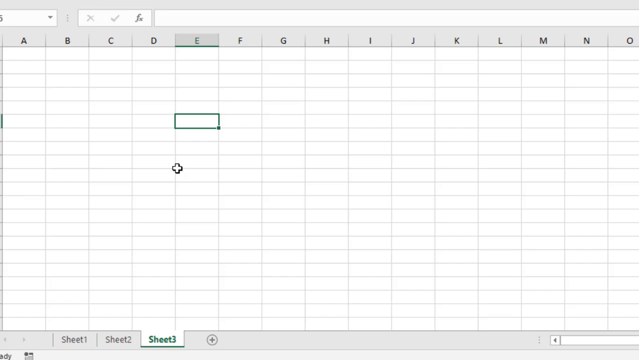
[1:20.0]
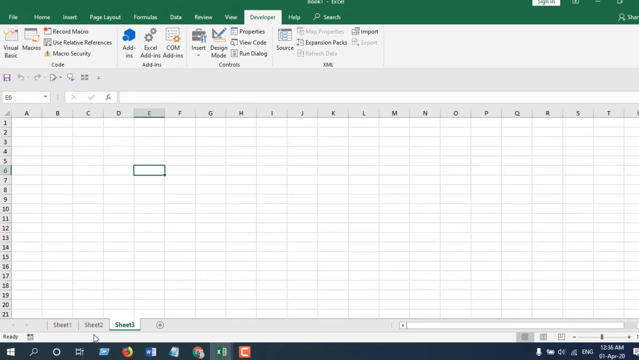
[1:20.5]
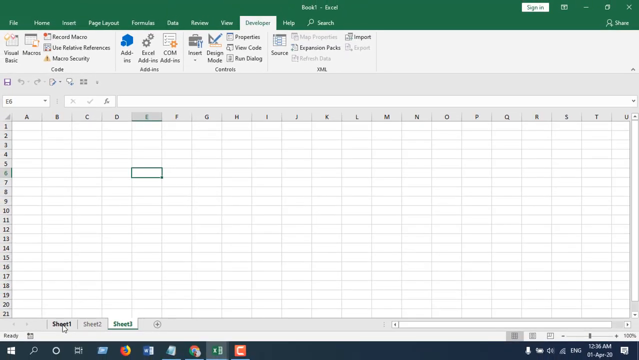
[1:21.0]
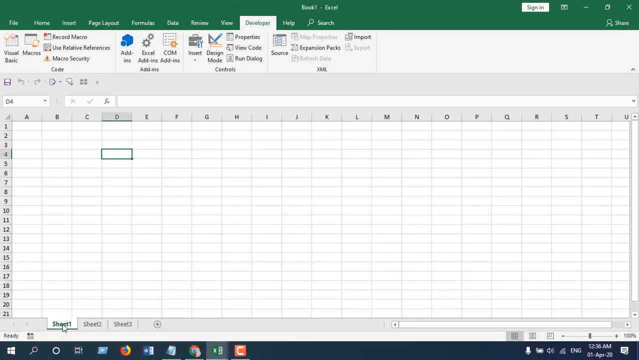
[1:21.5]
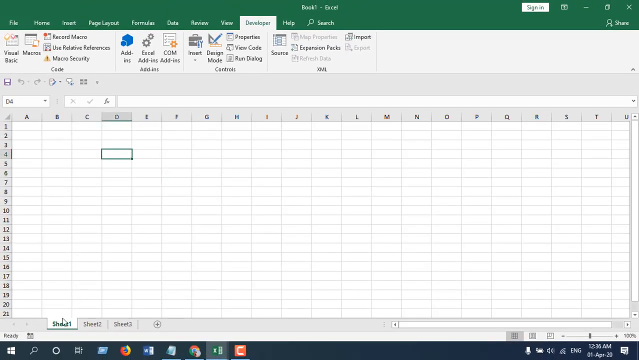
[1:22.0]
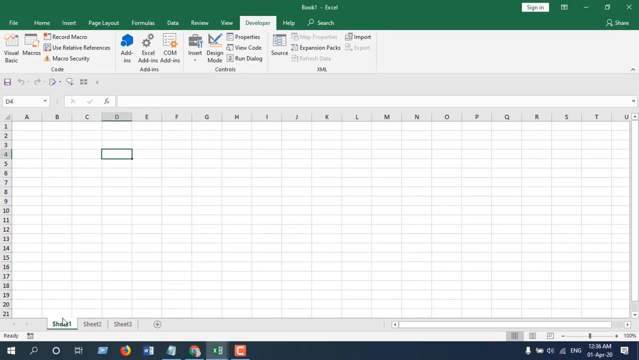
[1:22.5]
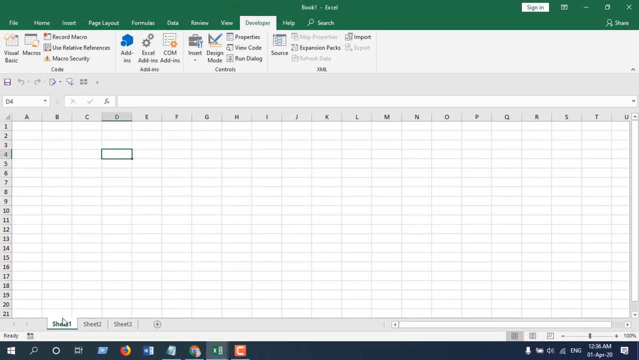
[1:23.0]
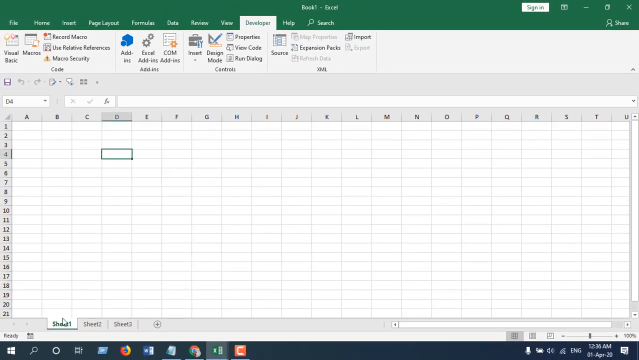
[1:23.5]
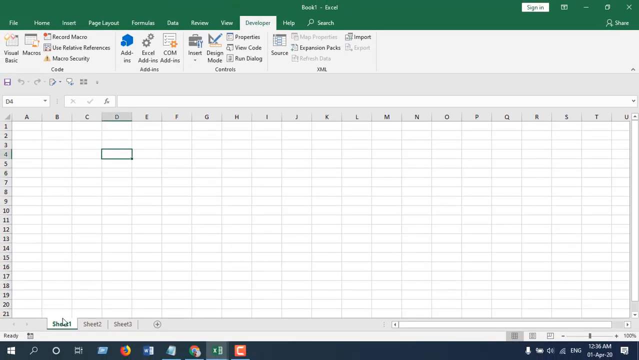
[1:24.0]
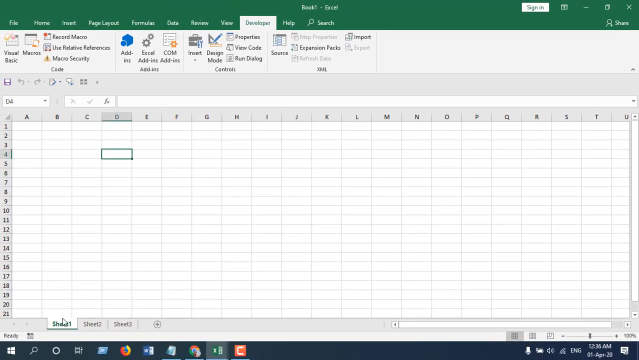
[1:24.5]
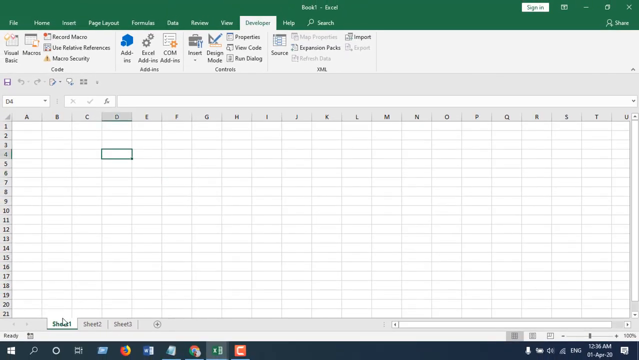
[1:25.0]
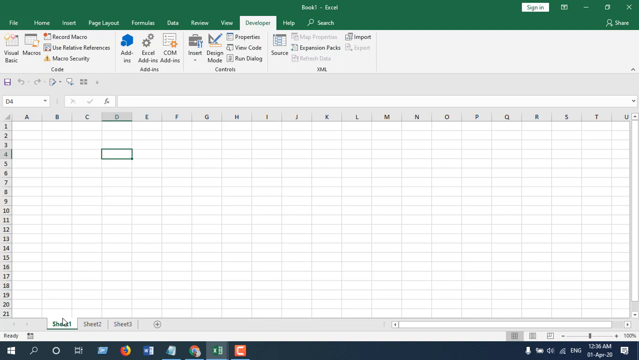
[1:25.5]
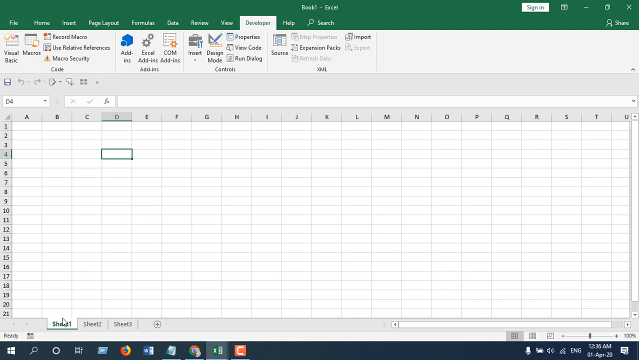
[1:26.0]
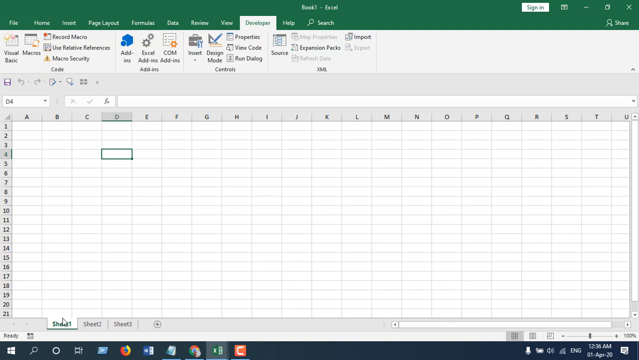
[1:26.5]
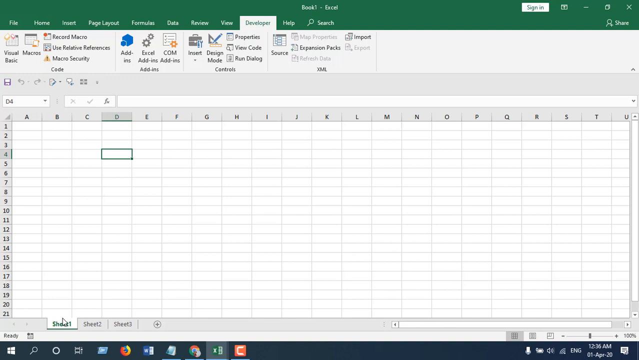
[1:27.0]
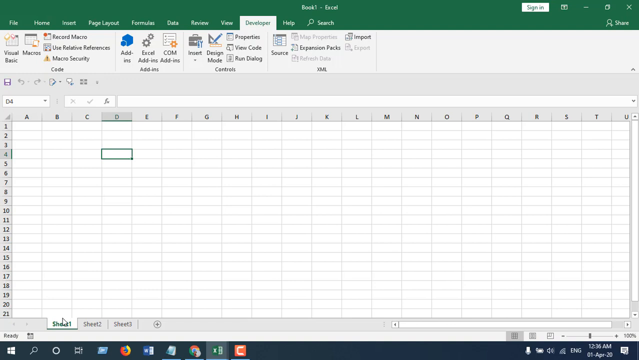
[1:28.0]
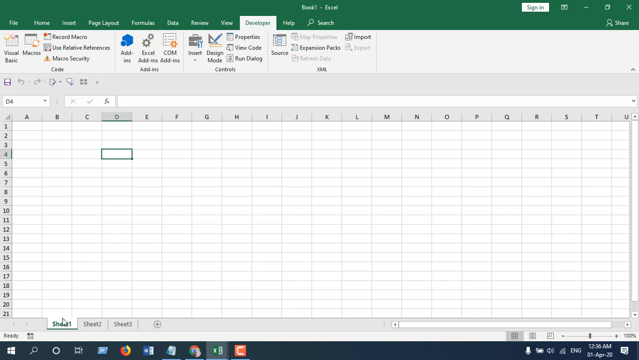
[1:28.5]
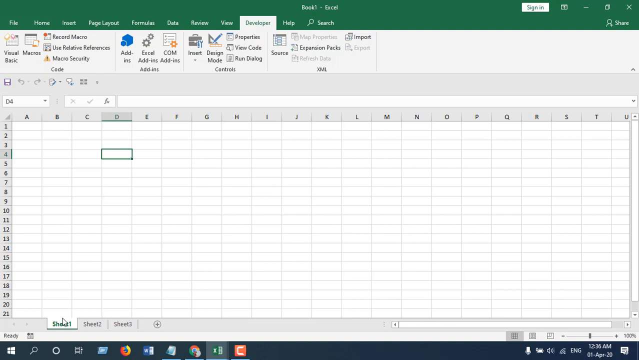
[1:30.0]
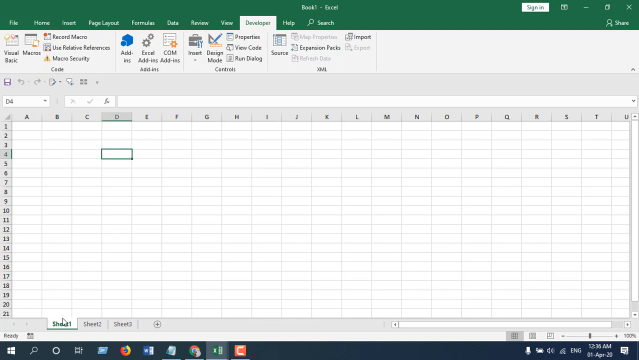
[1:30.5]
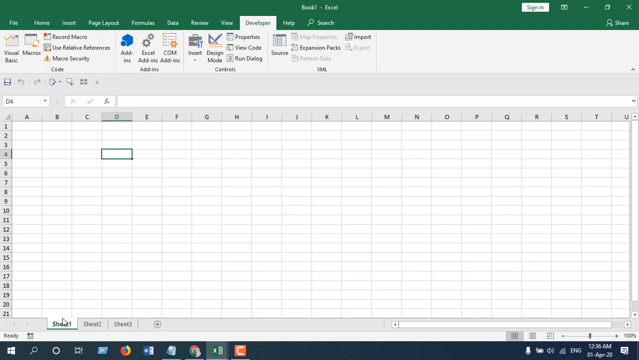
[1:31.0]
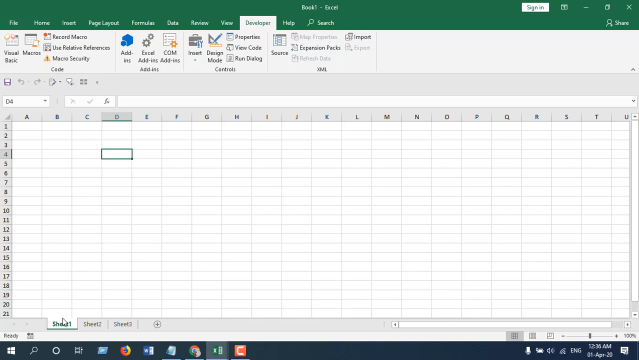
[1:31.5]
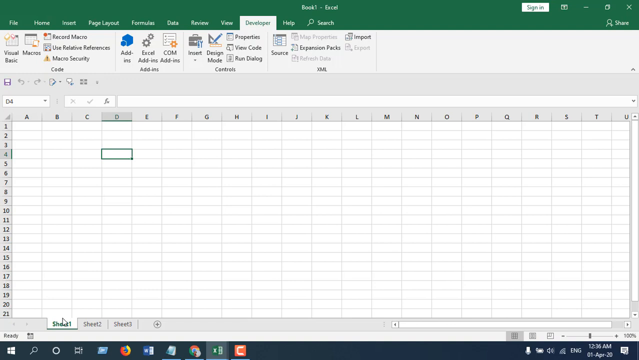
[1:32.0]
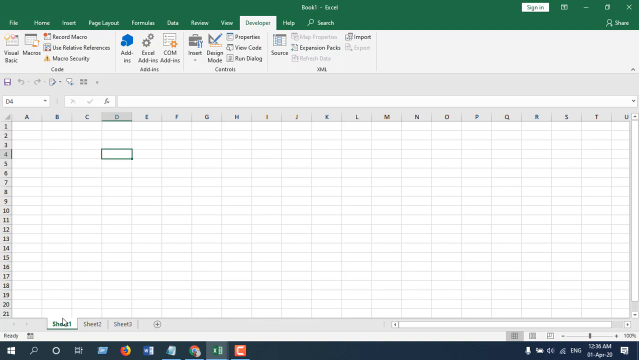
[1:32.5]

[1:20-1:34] The view pans out quite a bit, showing columns A through U across the top and rows 1 to 21 on the left. It then pans in close again to the highlighted box at about cell E7, where the white plus sign is. The highlighted cell is just outlined in green momentarily, not filled in.